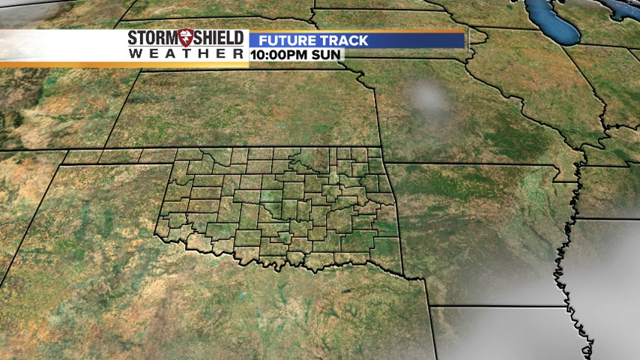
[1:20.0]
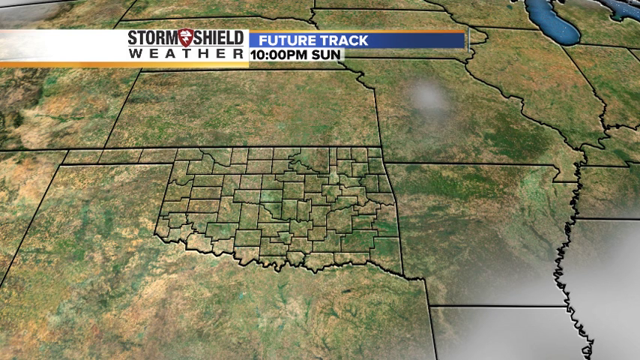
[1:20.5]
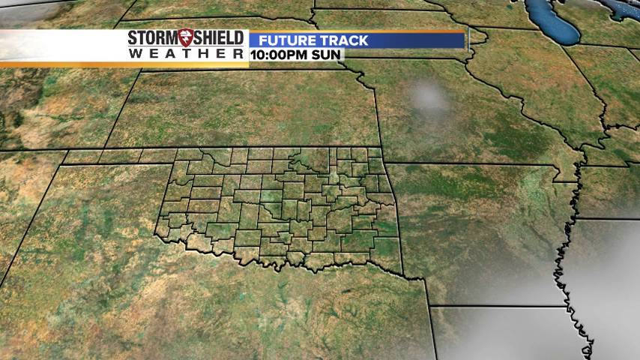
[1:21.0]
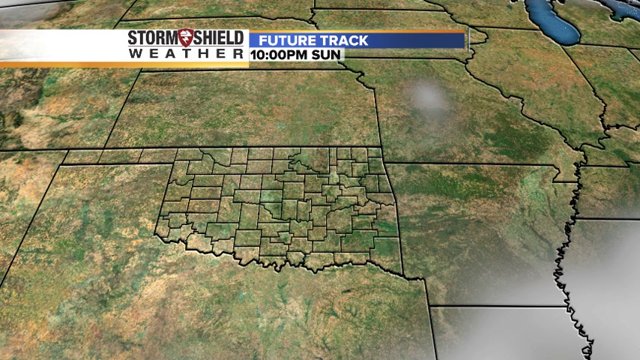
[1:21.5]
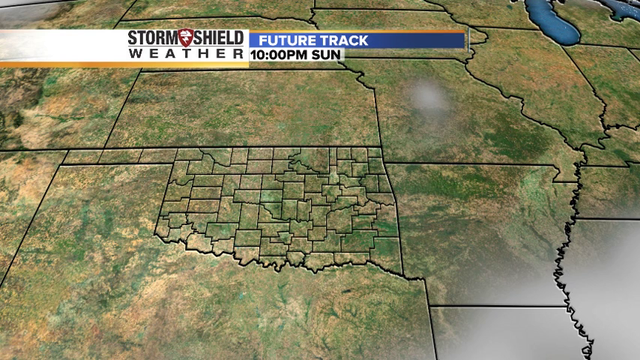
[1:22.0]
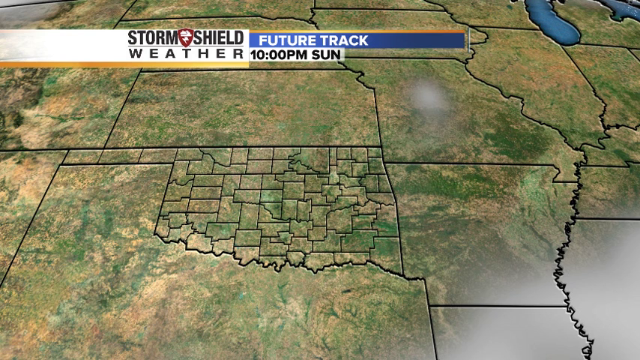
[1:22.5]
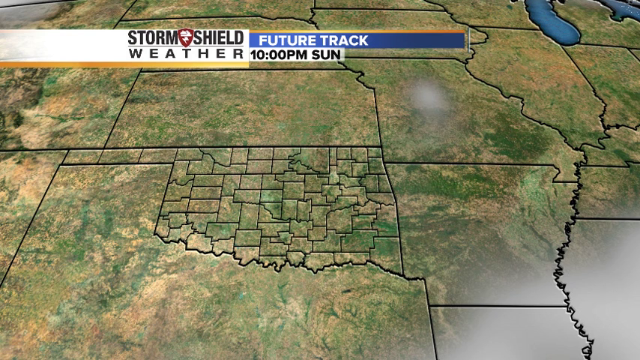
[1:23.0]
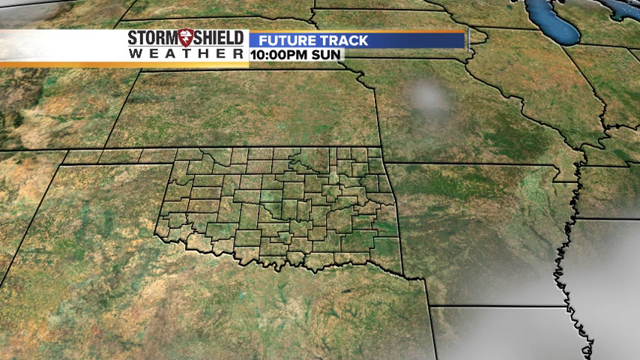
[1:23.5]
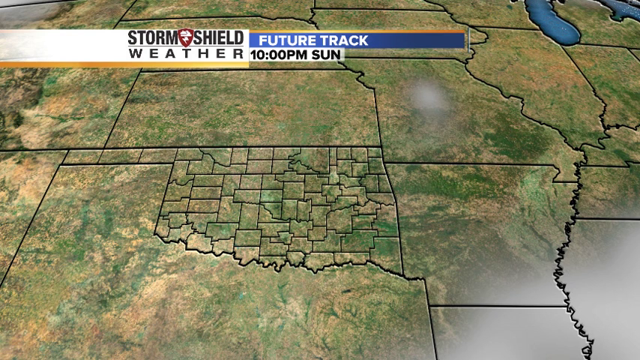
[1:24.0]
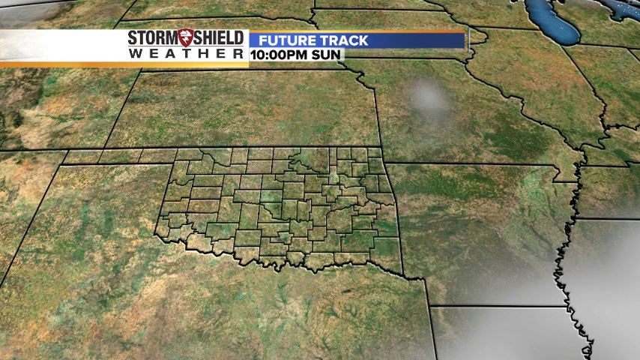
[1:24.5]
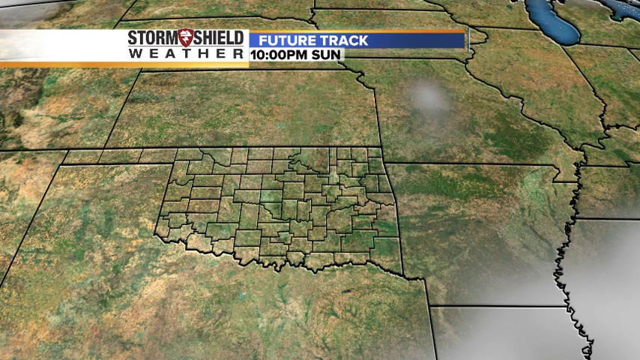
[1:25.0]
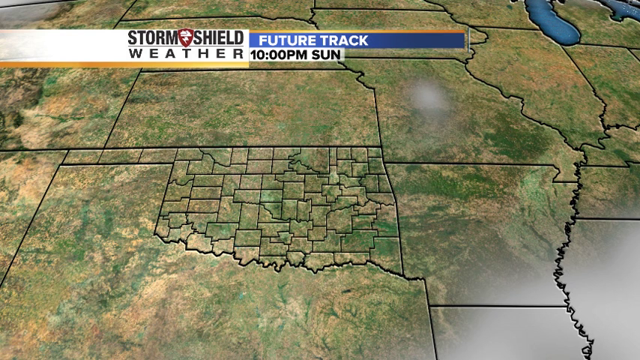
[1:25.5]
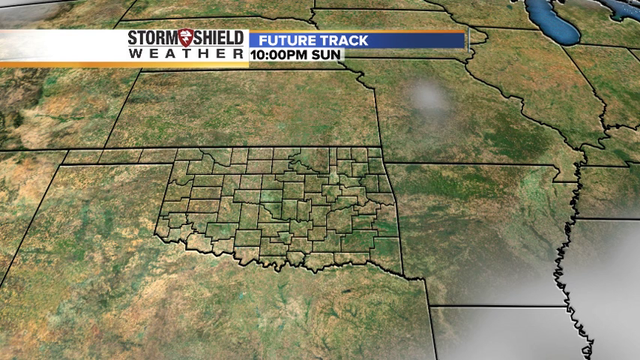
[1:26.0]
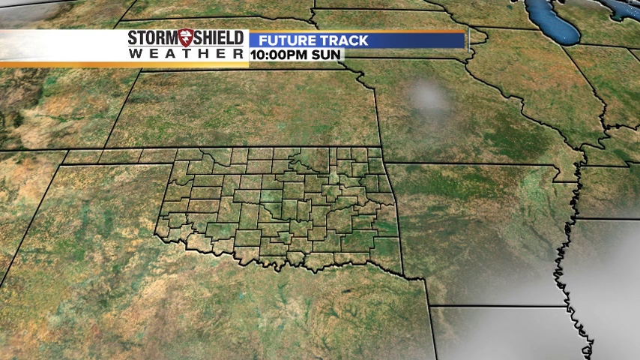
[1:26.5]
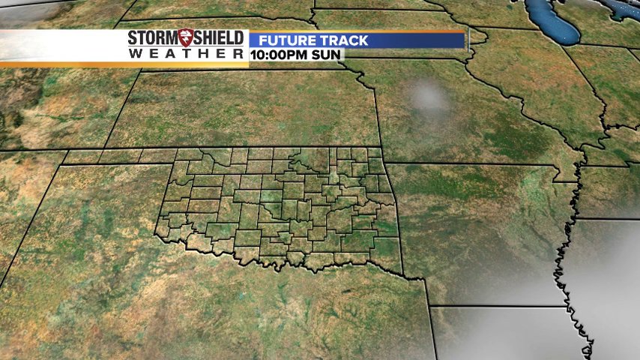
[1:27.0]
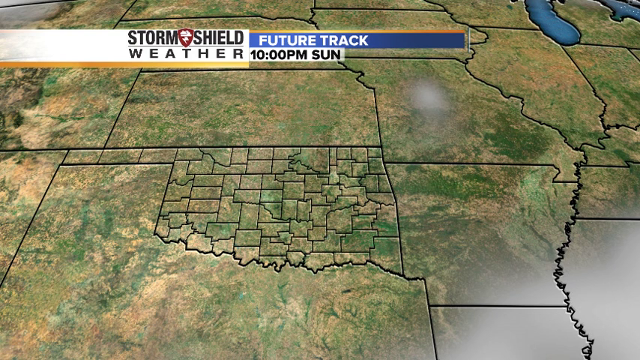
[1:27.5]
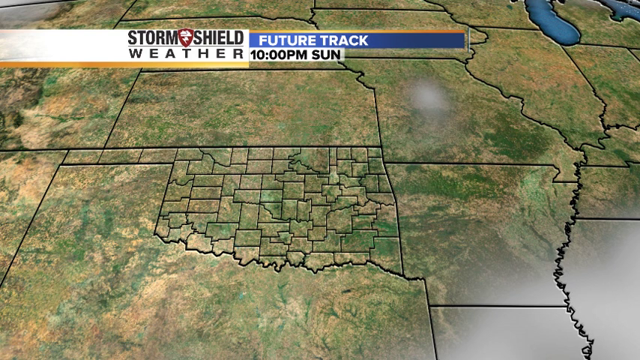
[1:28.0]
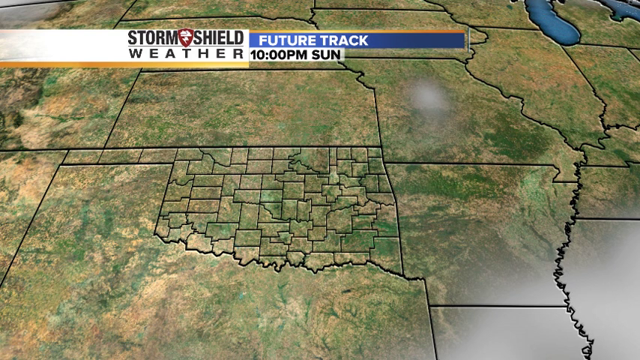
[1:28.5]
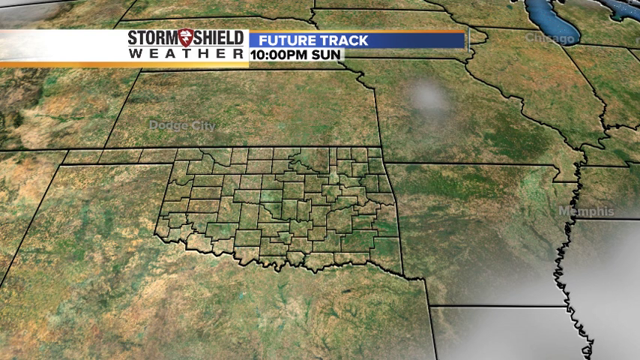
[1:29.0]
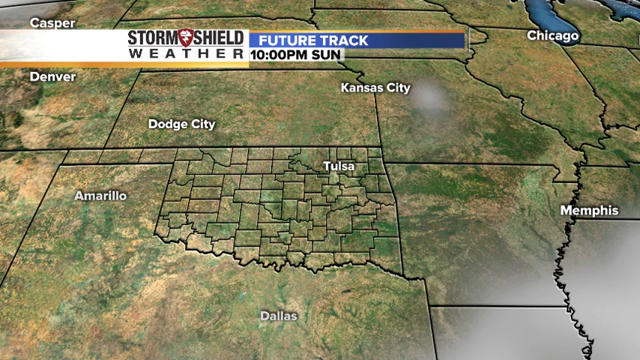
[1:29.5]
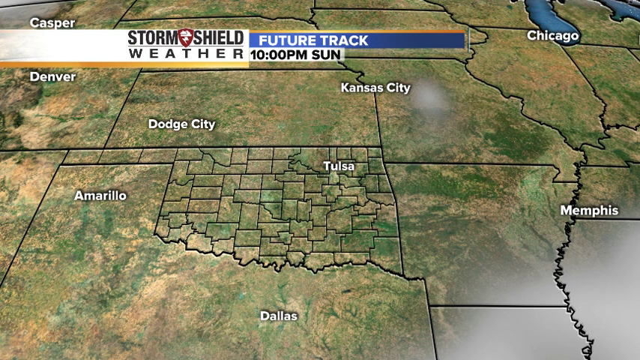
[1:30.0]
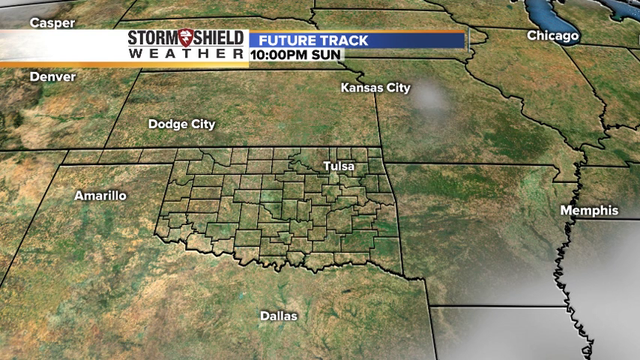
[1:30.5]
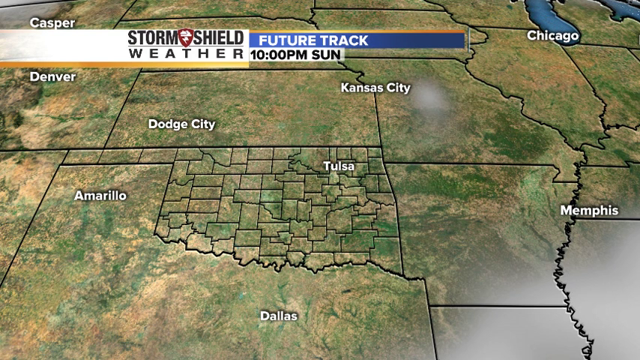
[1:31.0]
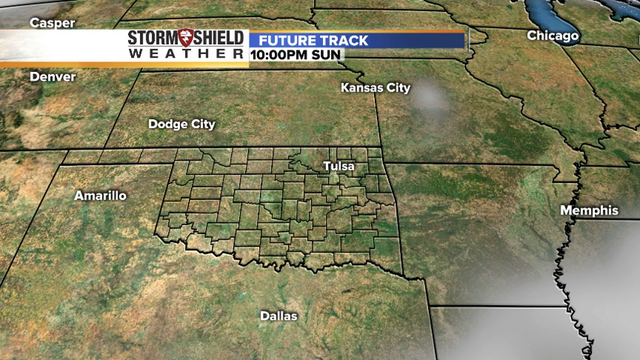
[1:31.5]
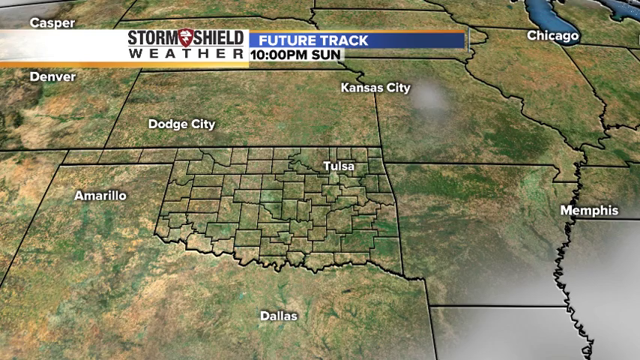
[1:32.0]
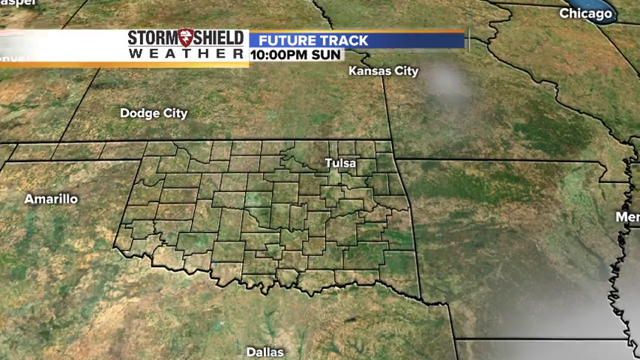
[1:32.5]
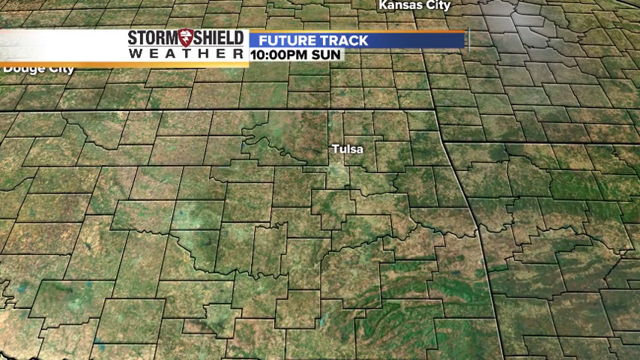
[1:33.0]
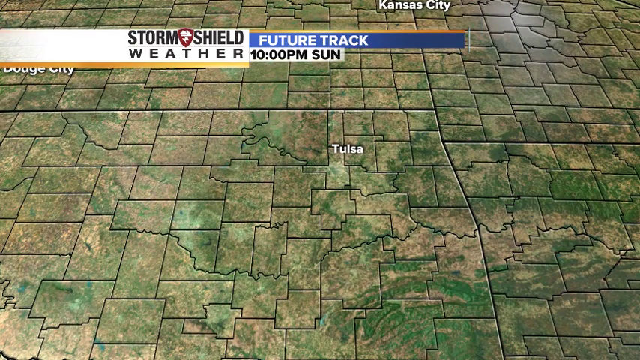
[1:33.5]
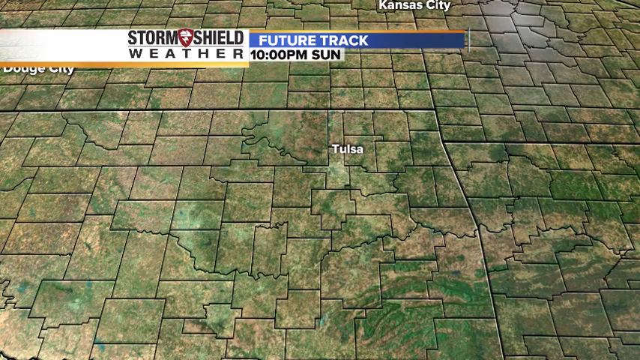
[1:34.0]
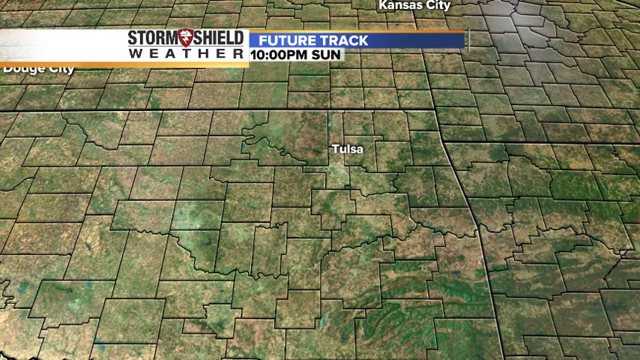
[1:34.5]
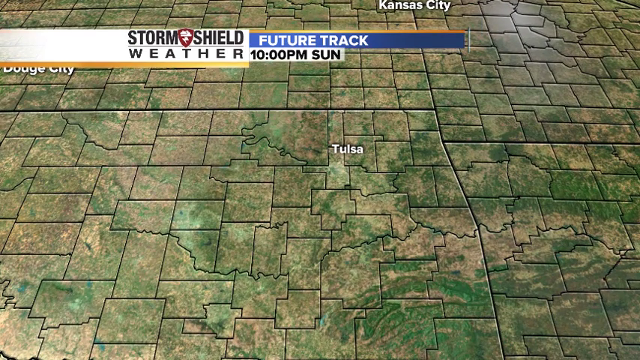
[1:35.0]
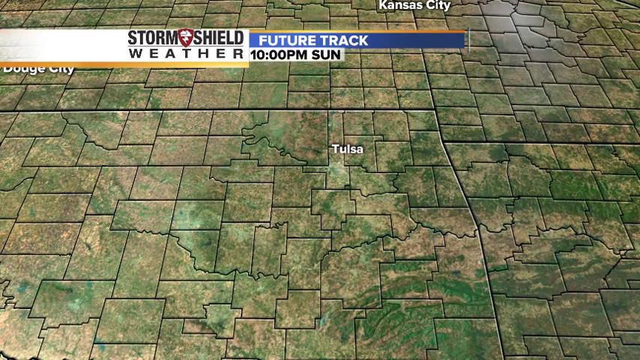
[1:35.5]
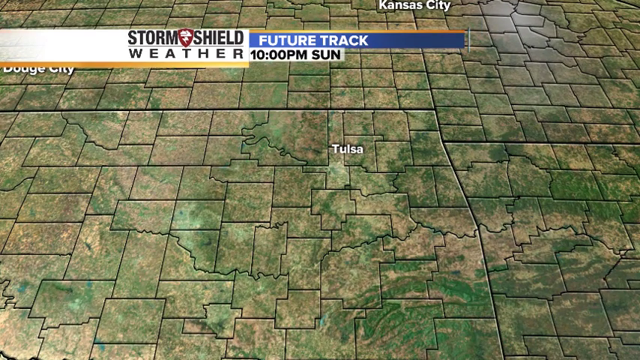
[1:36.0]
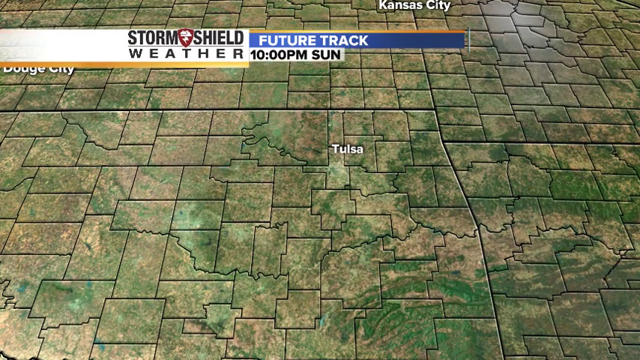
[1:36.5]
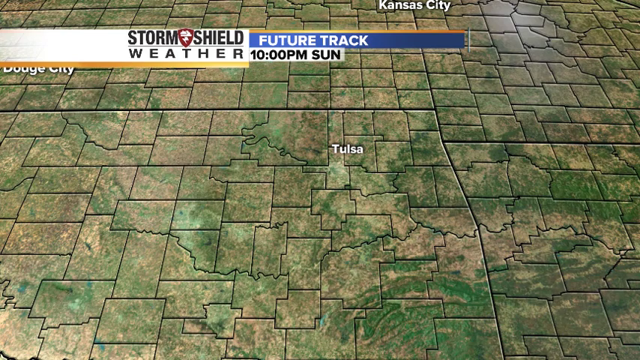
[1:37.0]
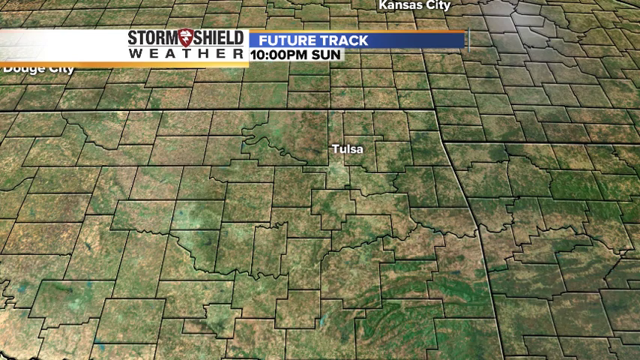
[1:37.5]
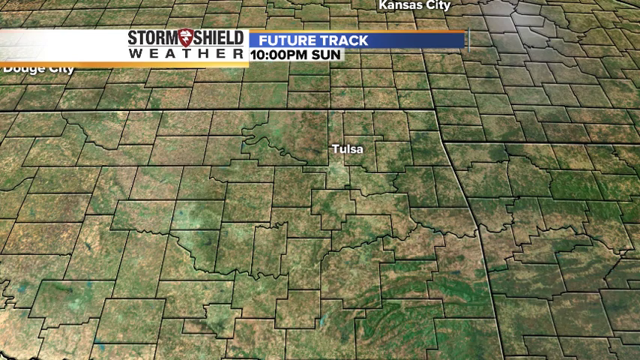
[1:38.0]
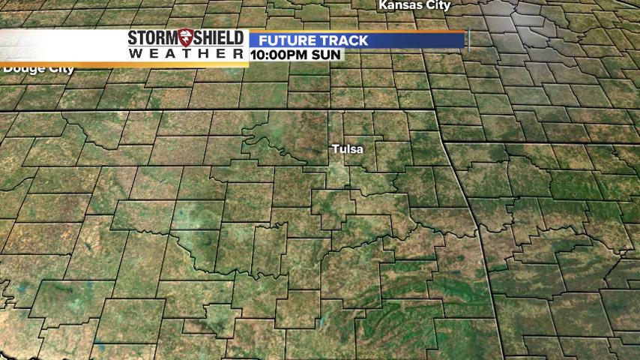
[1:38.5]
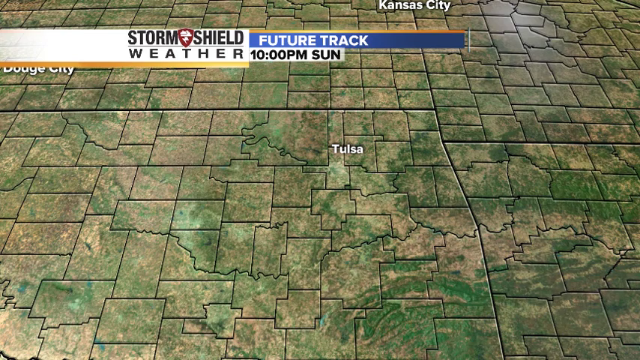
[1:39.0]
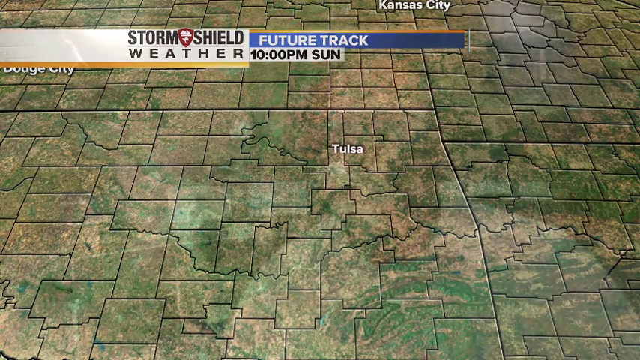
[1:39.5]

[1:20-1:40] The Storm Shield Weather banner indicates "future track 10 p.m sun" over a topographical map with black outlines of various regions in the area. Various shades of green, light green, dark green, black, gray, brown and yellow show different topographical details, and blue areas on the right indicate lakes. City names appear, including Denver, Amarillo, Dallas, Dodge City, Tulsa, Kansas City, Chicago and Memphis. The camera zooms in closer, showing Tulsa in white text, and stays on the cities. It then switches back to the man in the broadcast booth, who wears a white dress shirt and t-shirt and has a very prominent forehead and light brown hair; he is in a warehouse-type setting with computers behind him.